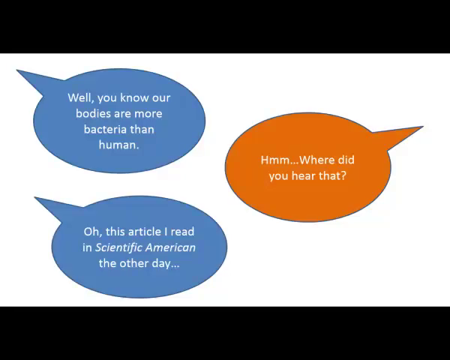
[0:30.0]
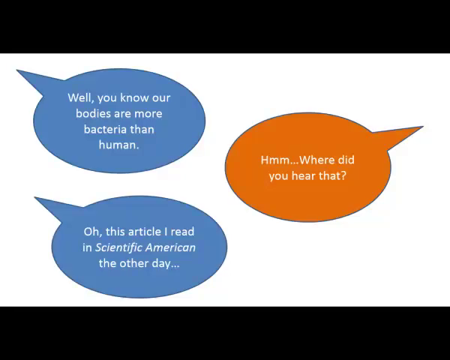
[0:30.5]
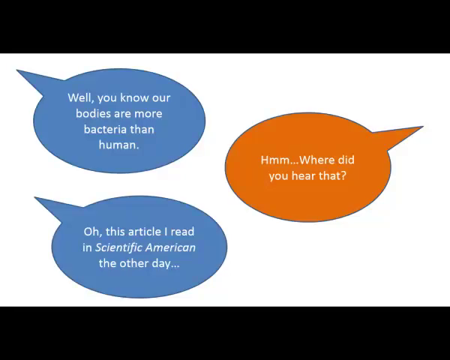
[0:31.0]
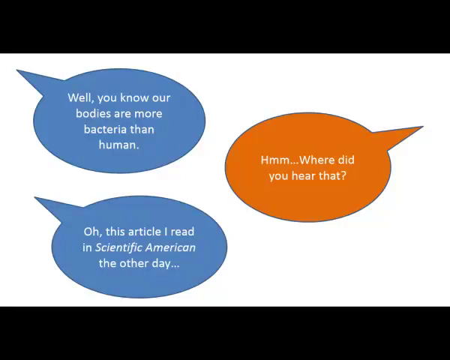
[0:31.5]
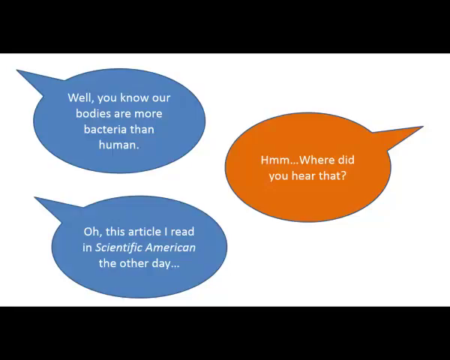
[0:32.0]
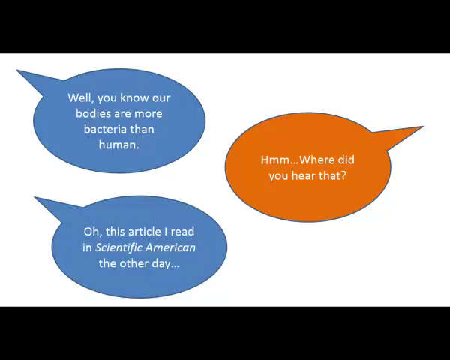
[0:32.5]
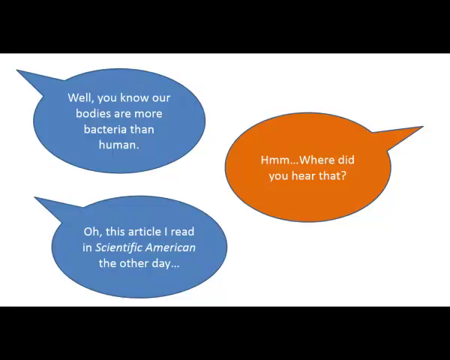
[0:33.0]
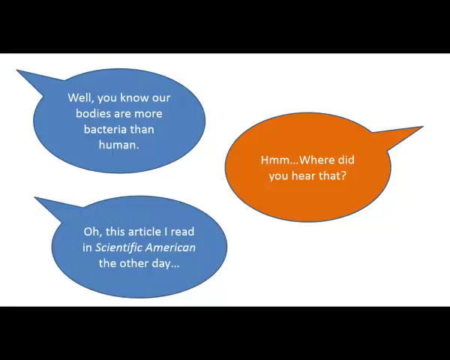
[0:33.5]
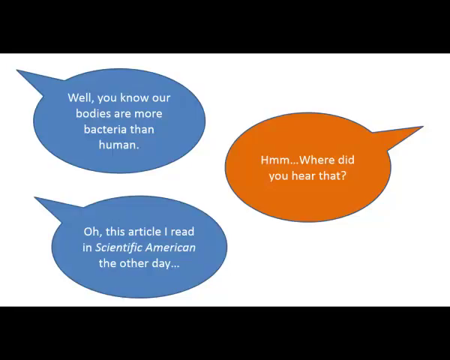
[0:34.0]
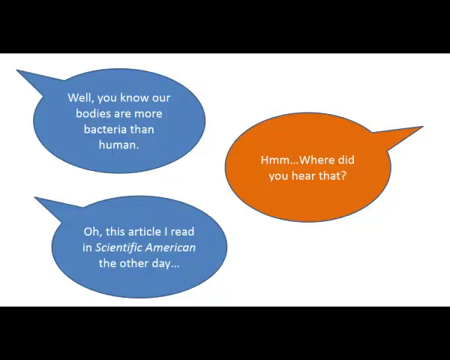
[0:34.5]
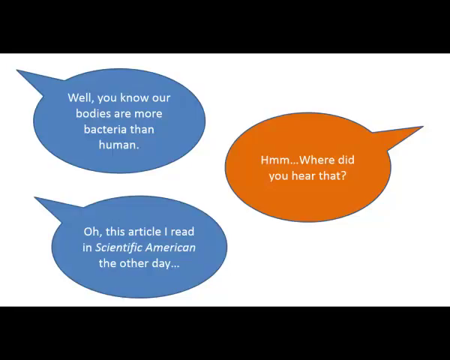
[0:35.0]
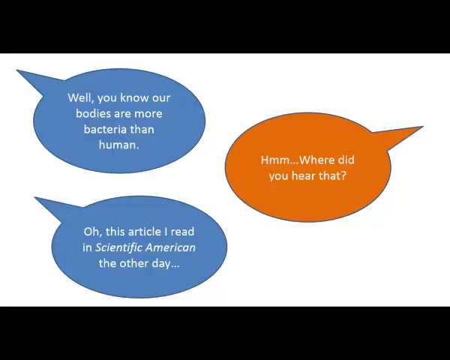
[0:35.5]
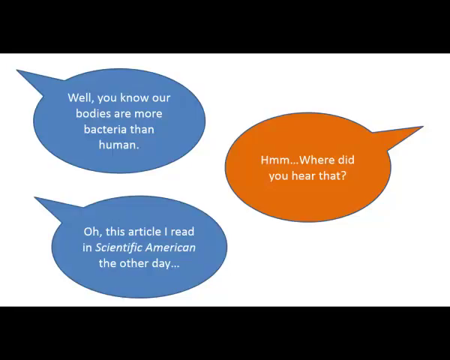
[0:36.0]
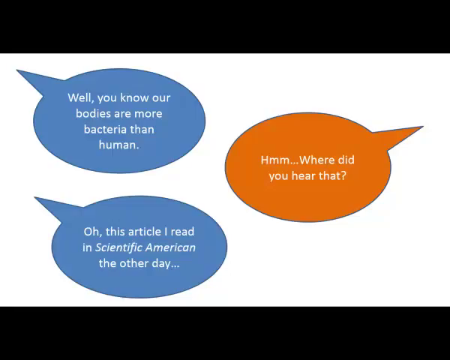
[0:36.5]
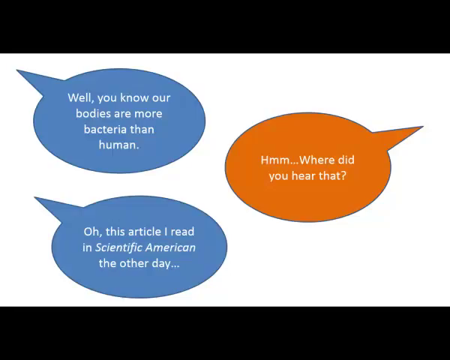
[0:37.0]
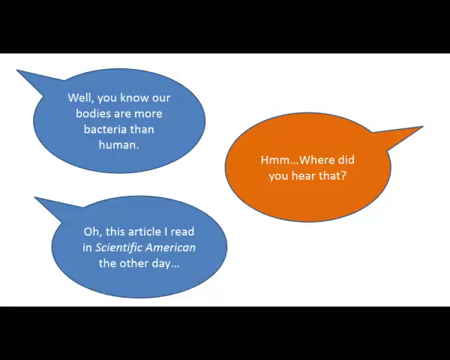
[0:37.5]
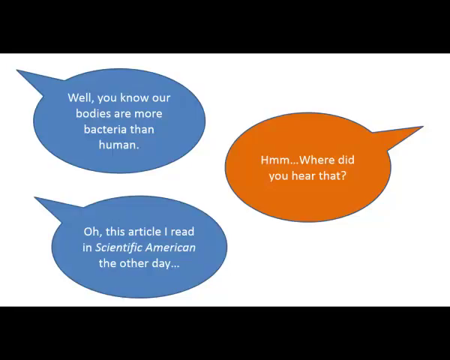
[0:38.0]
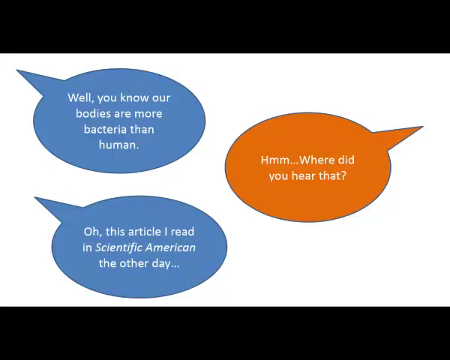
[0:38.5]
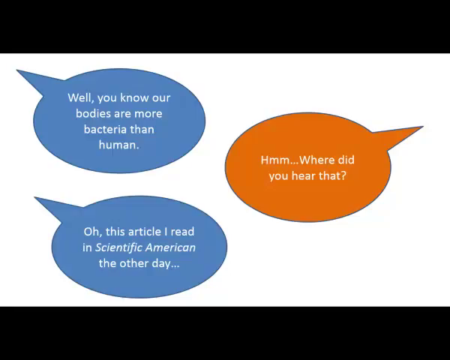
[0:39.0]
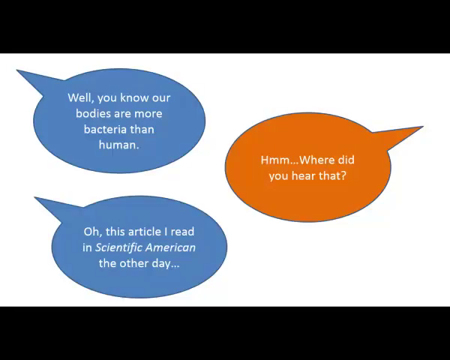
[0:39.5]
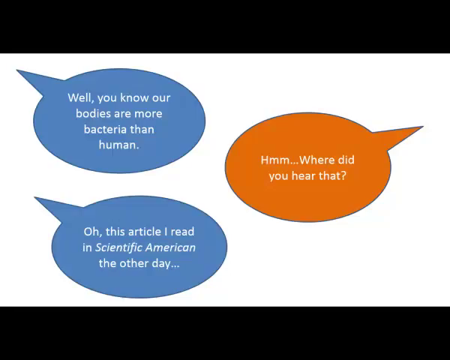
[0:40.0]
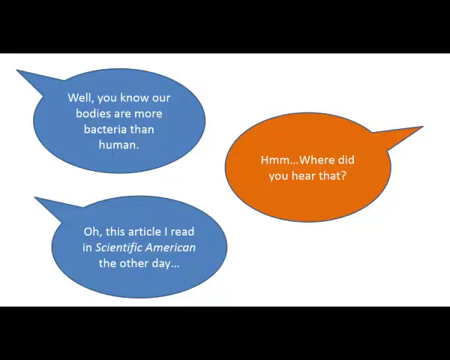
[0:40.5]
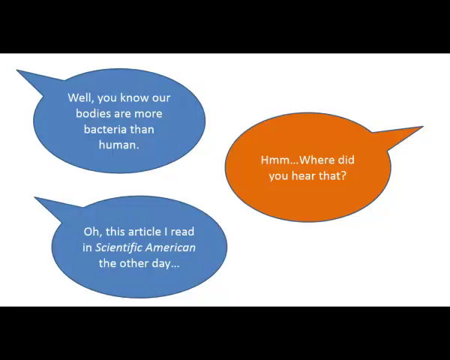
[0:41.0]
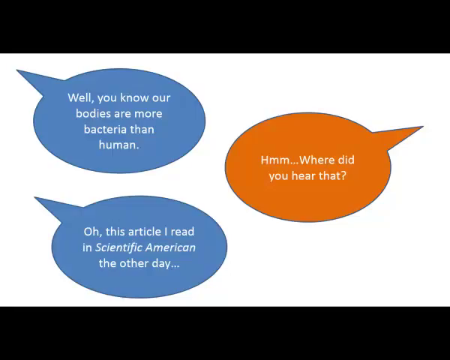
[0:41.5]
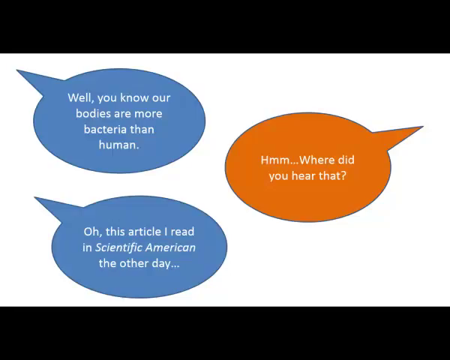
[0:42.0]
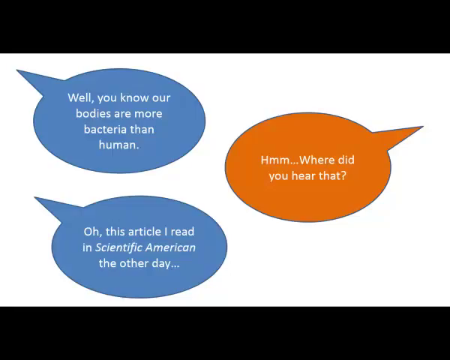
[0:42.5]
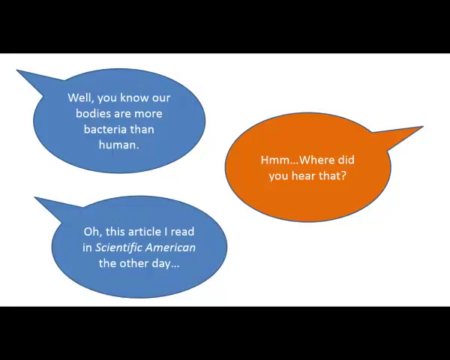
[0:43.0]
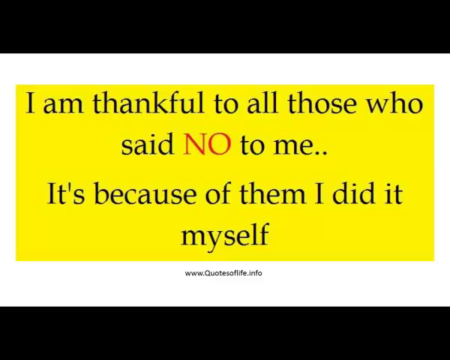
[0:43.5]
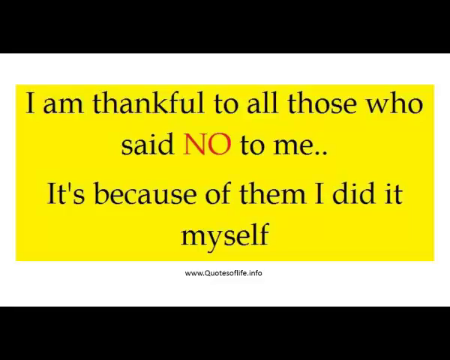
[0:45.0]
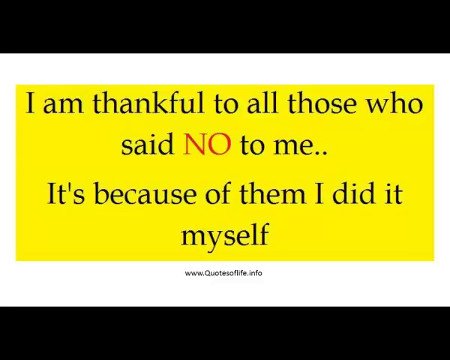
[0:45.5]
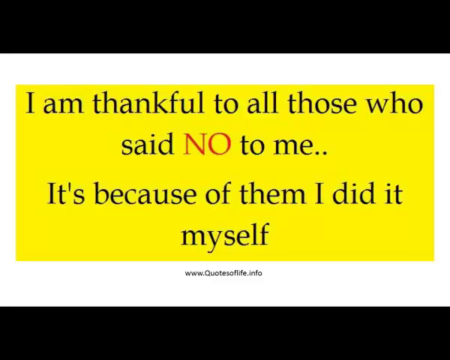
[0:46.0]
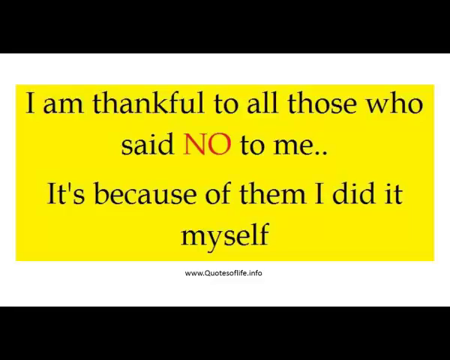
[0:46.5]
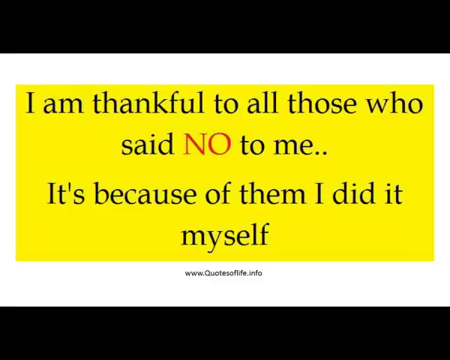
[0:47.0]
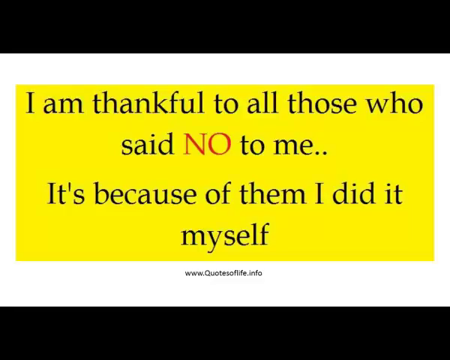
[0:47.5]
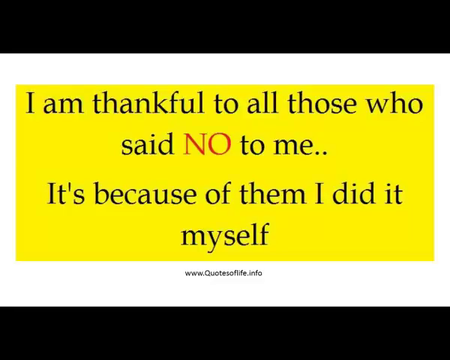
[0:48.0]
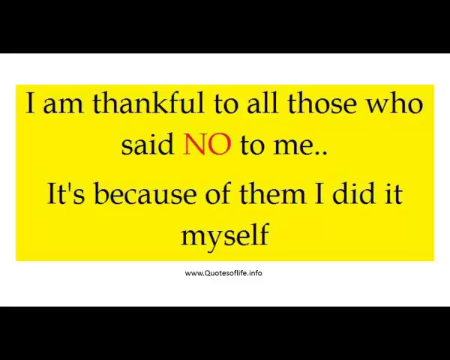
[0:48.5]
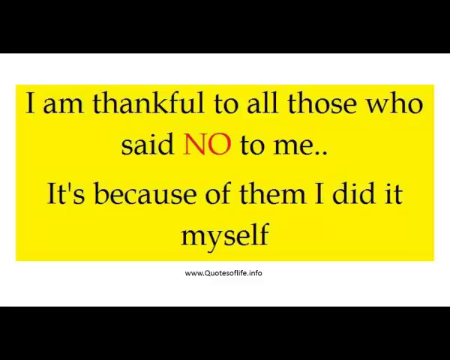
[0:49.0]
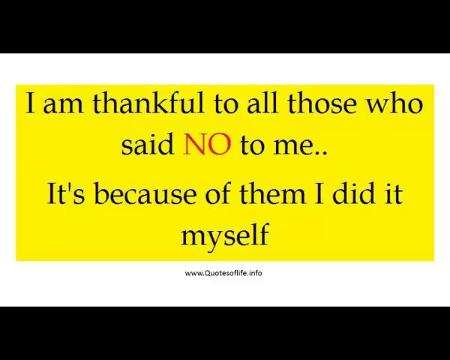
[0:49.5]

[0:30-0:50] The three speech bubbles continue: the top blue one reads "well, you know our bodies are more bacteria than human," the bottom one reads "oh, this article I read in Scientific American the other day," and the third reads "hmm, where did you hear that?" Then another slide appears with a white background and a yellow square containing black text that reads "I am thankful to all those who said no to me. It's because of them I did it myself." Beneath it is a very small link reading "www.quotesoflife.info." This slide remains until the end of the shot.